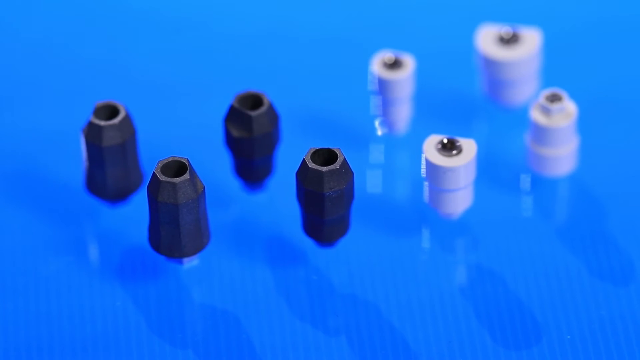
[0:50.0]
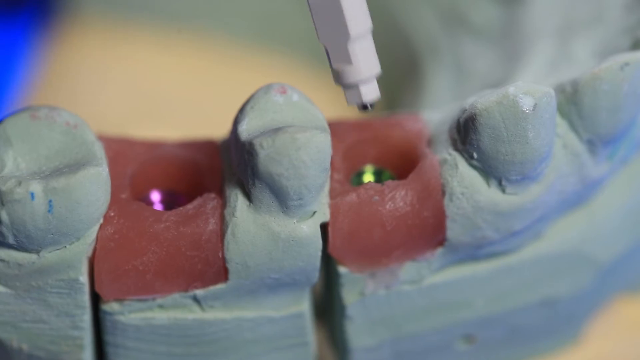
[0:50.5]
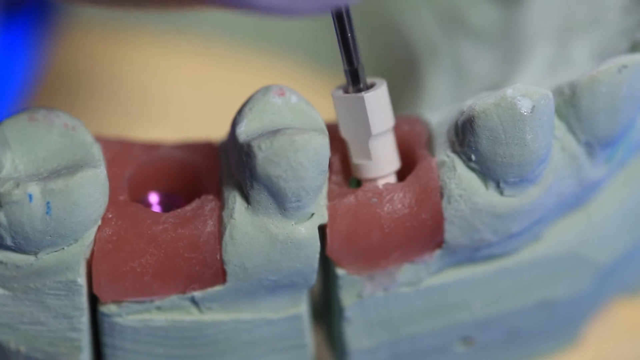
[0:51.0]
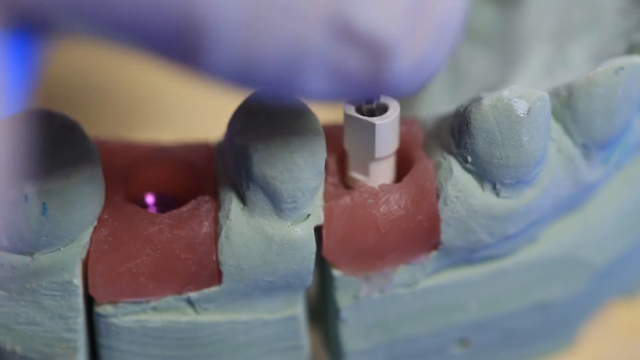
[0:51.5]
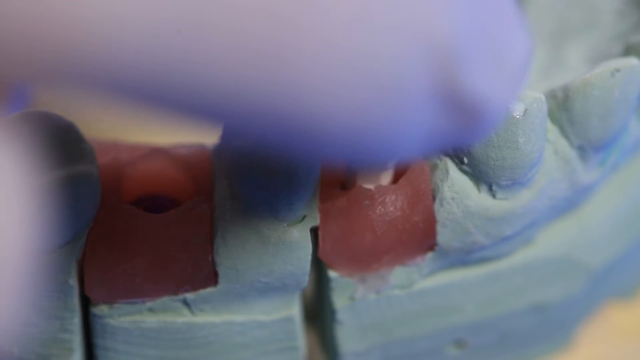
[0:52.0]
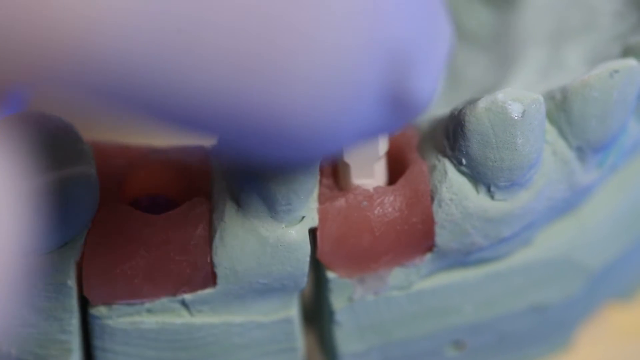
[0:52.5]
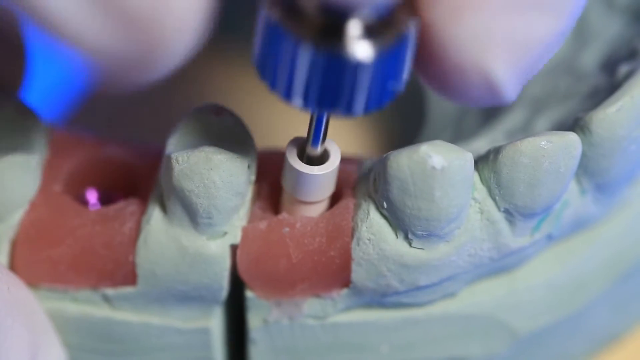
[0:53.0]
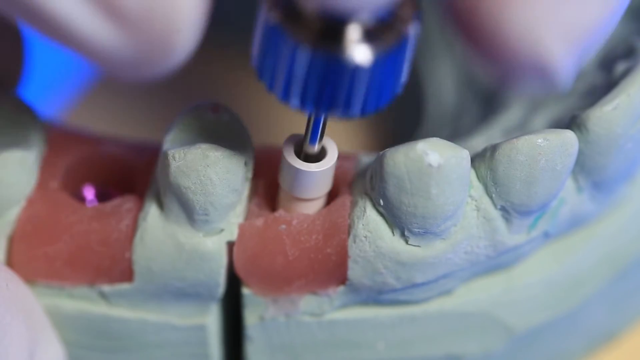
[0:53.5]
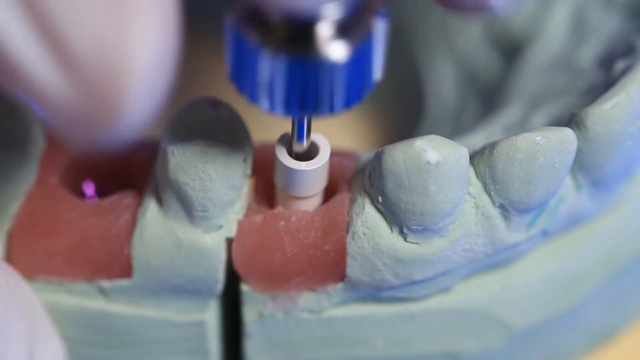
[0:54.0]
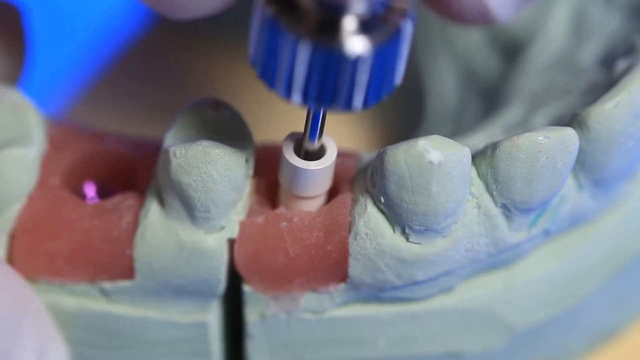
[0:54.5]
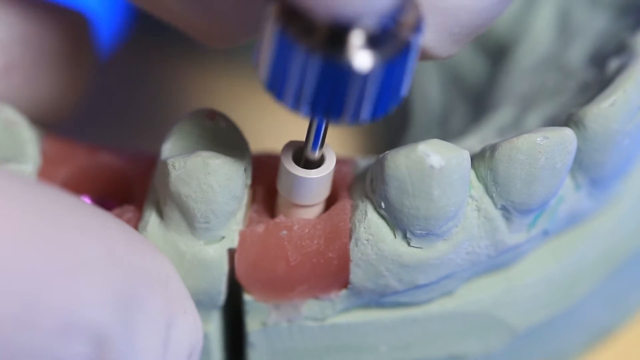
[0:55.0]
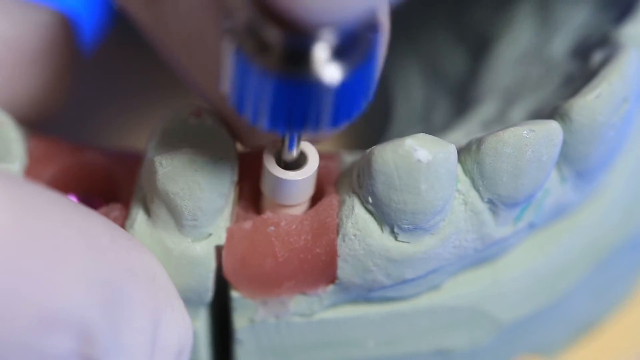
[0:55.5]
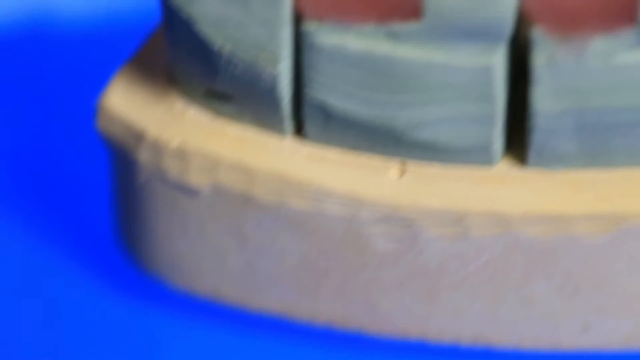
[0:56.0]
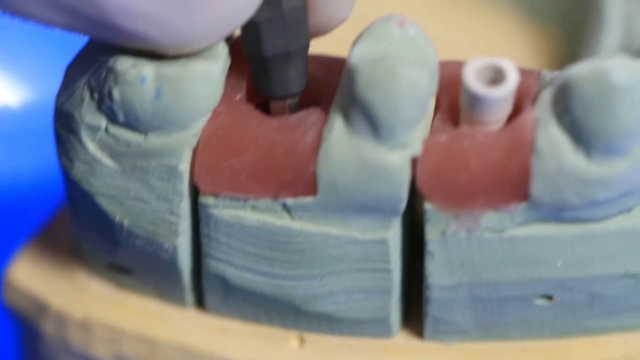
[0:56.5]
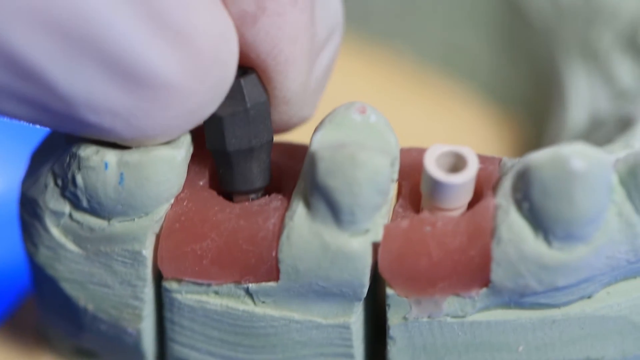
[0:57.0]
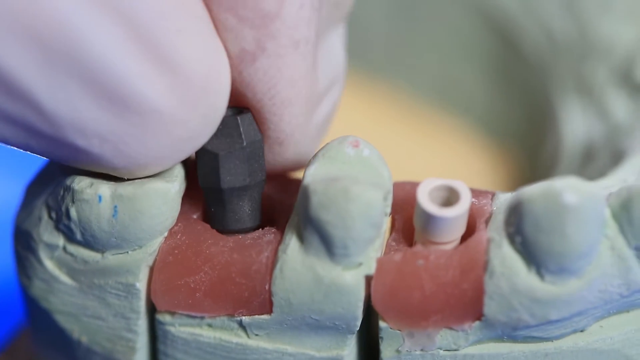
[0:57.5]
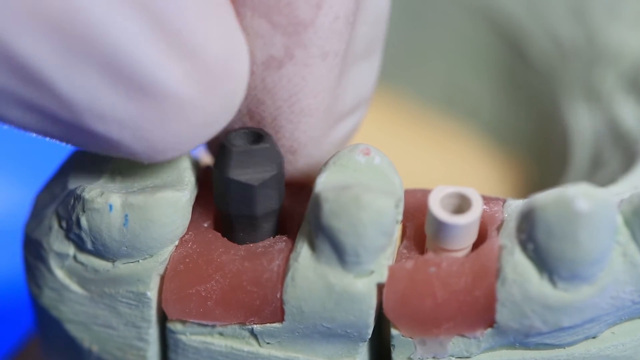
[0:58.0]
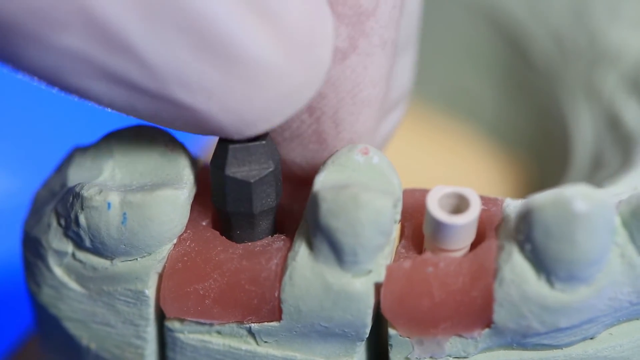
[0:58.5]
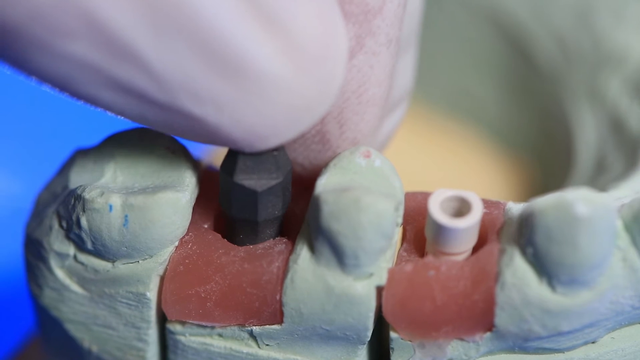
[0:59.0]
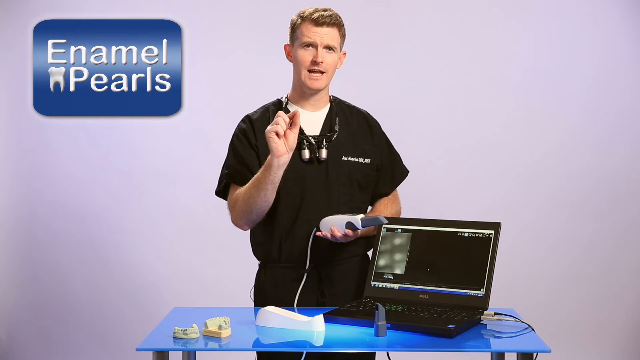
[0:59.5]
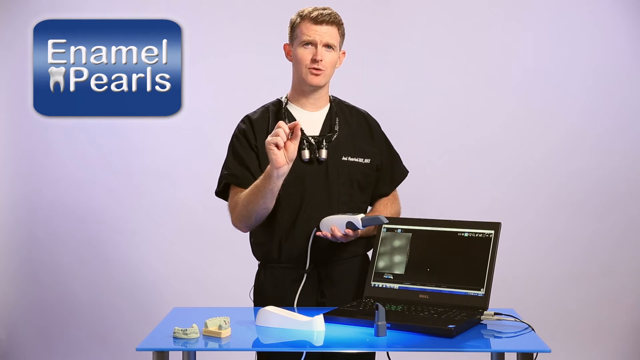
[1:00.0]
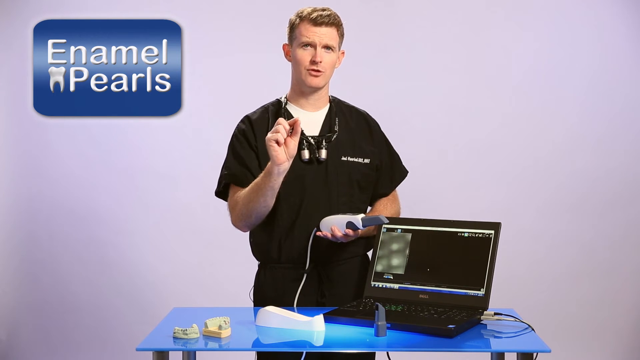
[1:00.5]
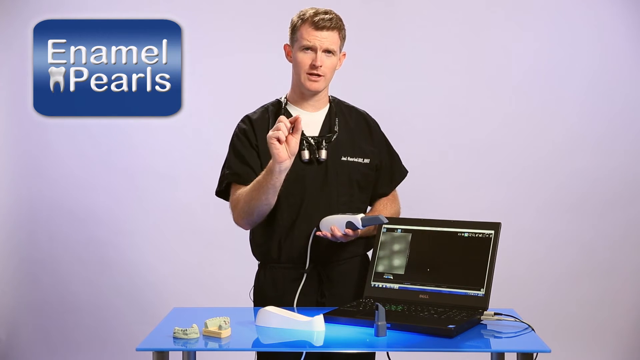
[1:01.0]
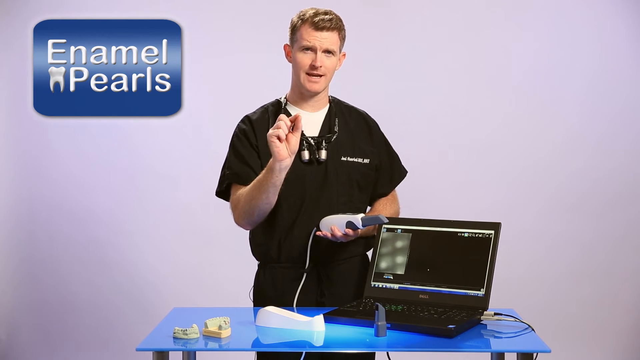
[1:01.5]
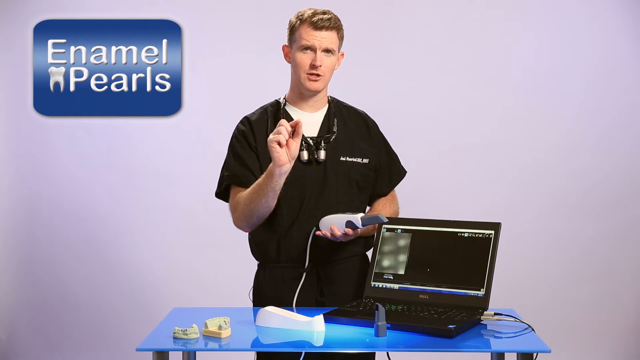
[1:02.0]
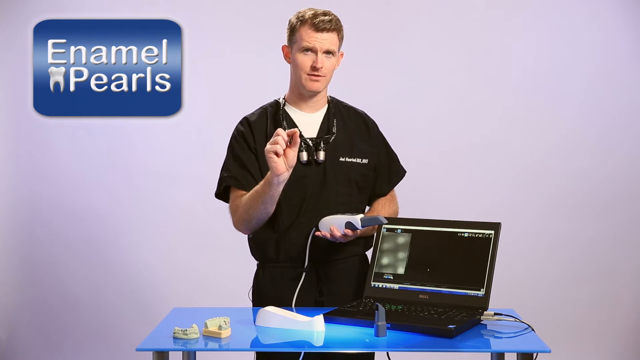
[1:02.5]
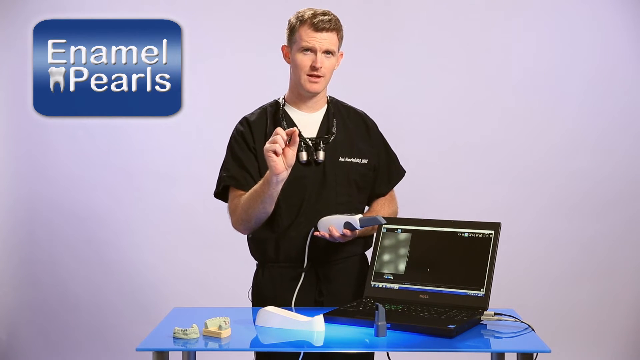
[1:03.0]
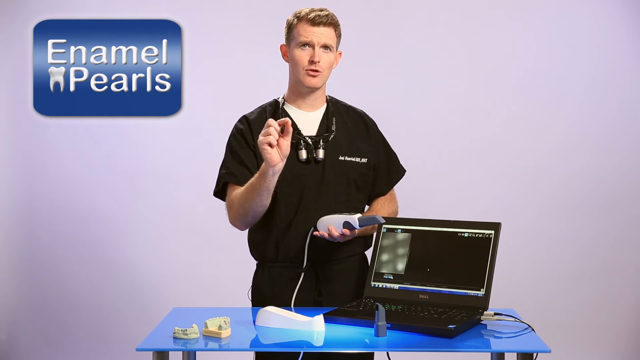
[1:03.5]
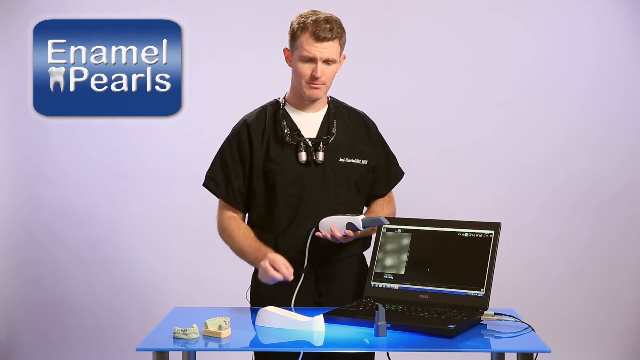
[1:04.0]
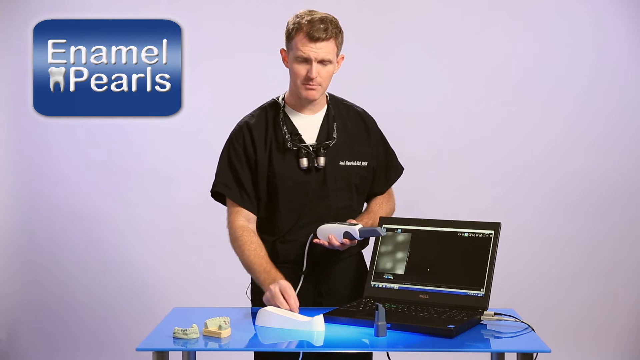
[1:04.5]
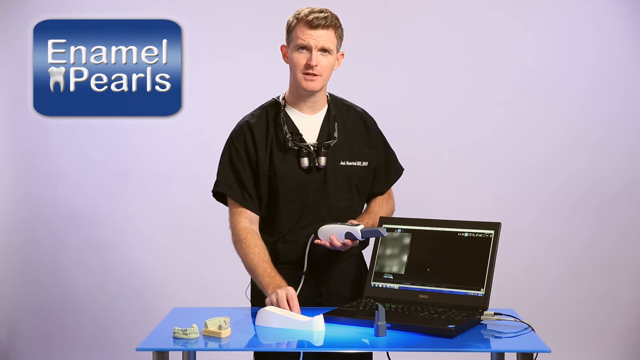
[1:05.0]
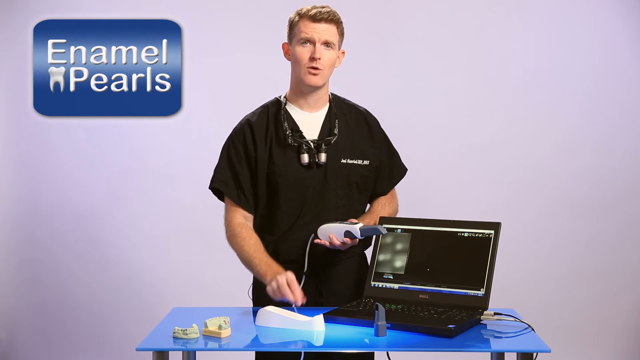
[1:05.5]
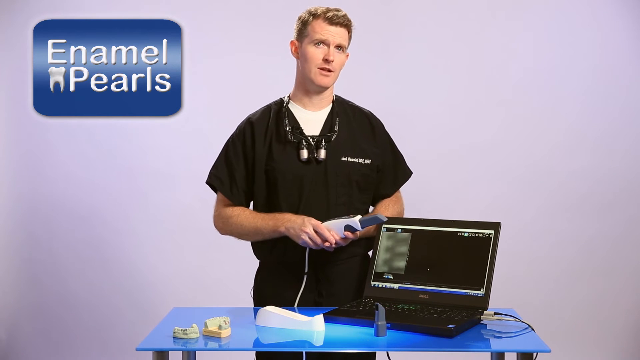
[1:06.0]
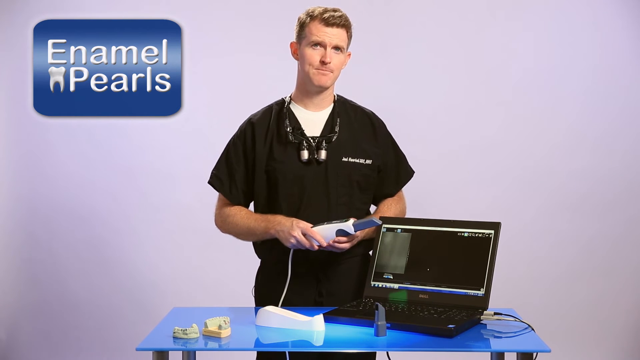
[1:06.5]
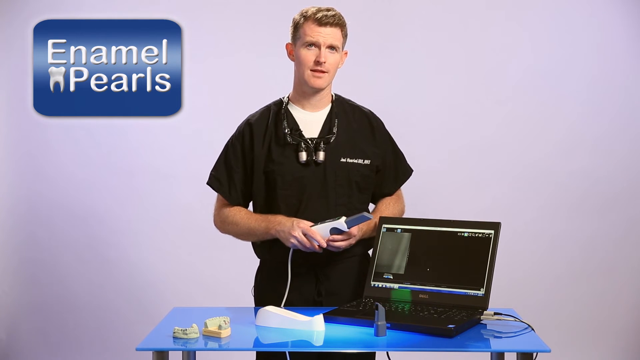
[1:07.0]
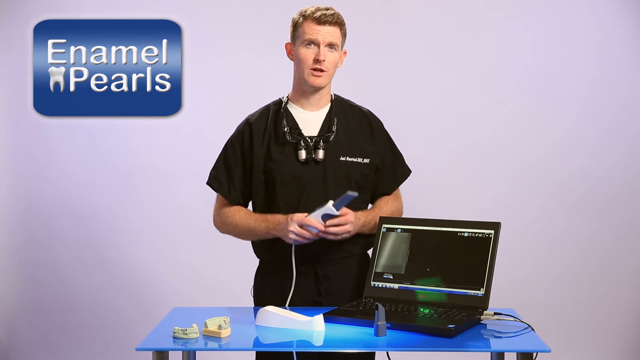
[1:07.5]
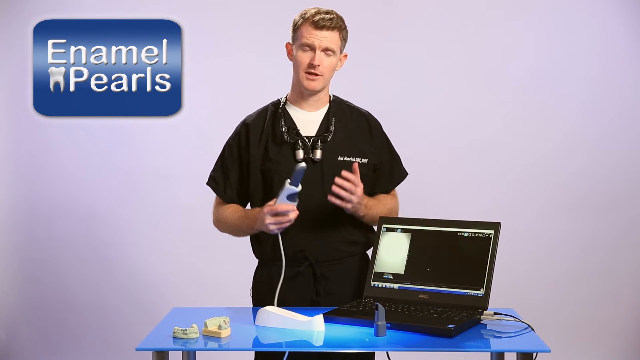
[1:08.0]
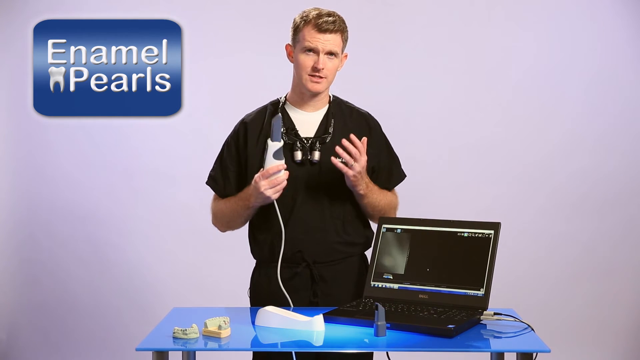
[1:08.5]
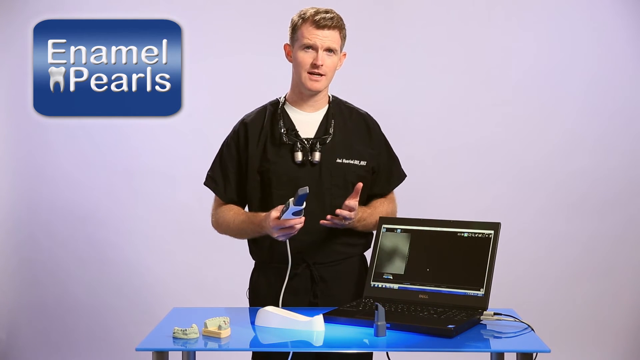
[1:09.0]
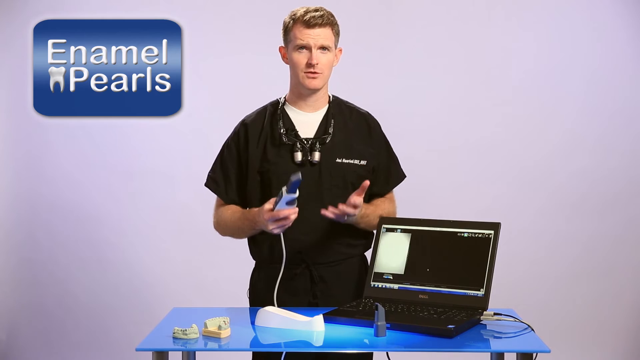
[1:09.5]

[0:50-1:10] Eight little screws lie on top of a glass table: four black and four white. The video cuts to a mold of teeth, where the little screws are applied into an area with a missing tooth, and one of the black ones is applied near the molar area. The video goes back to the man in the black shirt, who appears to be a dentist, explaining something to the camera. The computer is ahead of him, and he holds the device in his left hand while describing something and gesturing with his hands. The device is a recording device: as he moves it, its recording is displayed on the laptop. The device is shown to be used in people's mouths to see what is inside.